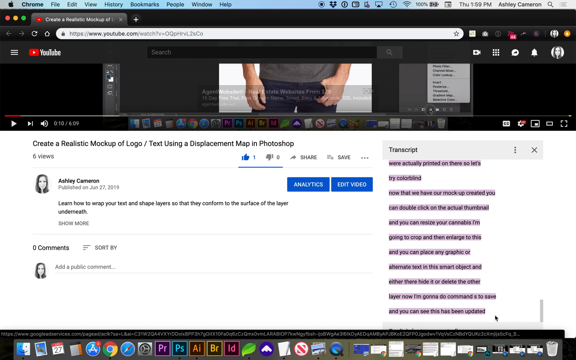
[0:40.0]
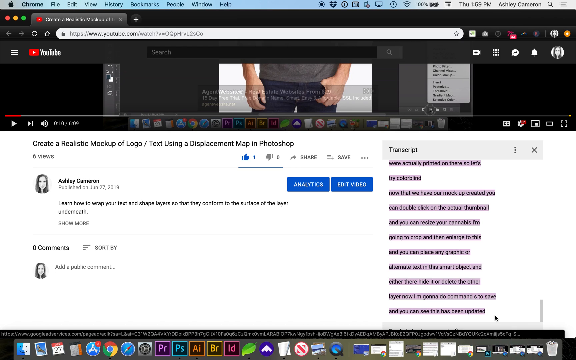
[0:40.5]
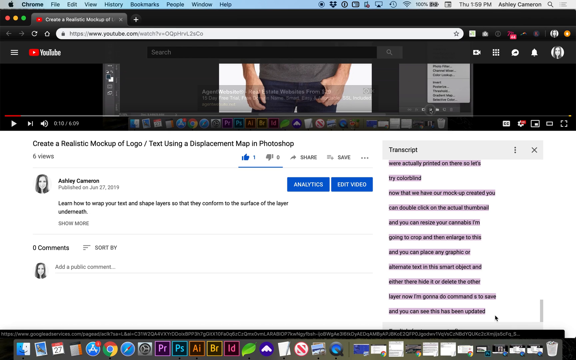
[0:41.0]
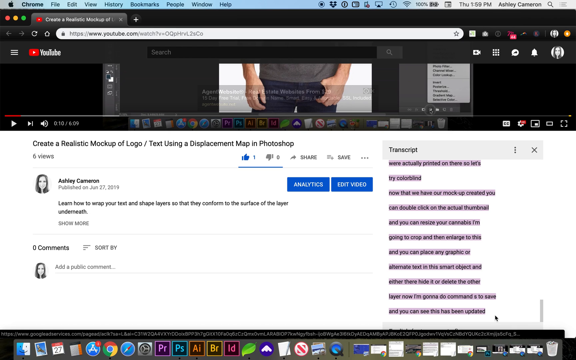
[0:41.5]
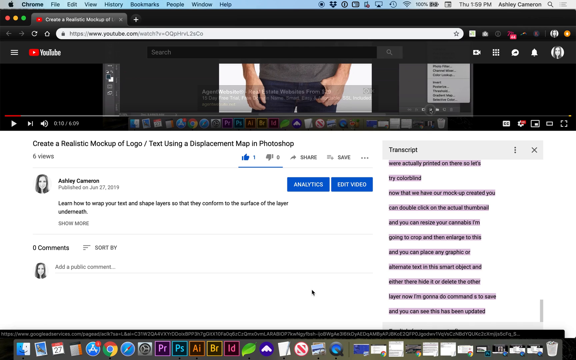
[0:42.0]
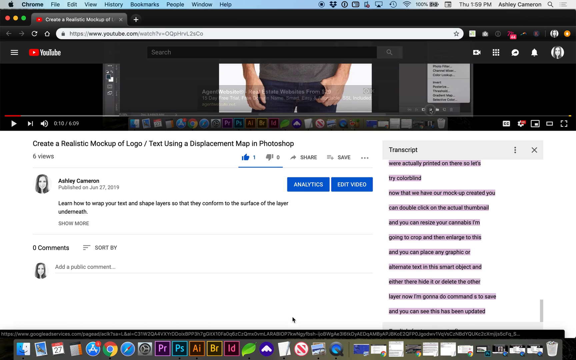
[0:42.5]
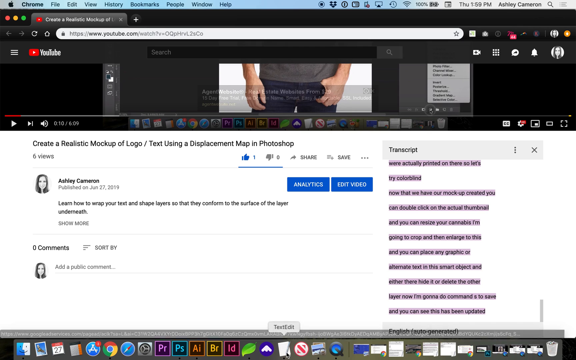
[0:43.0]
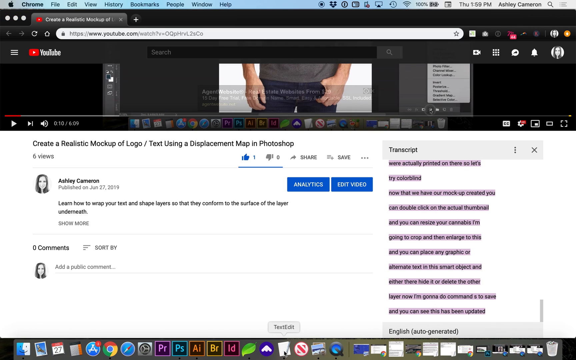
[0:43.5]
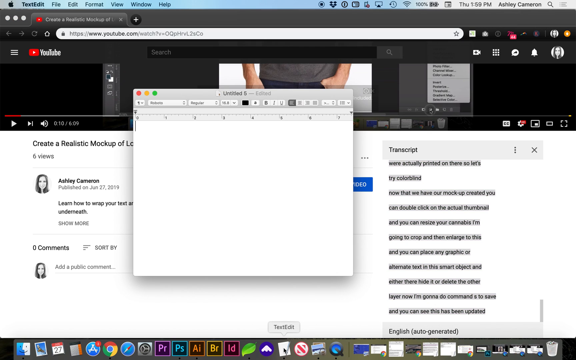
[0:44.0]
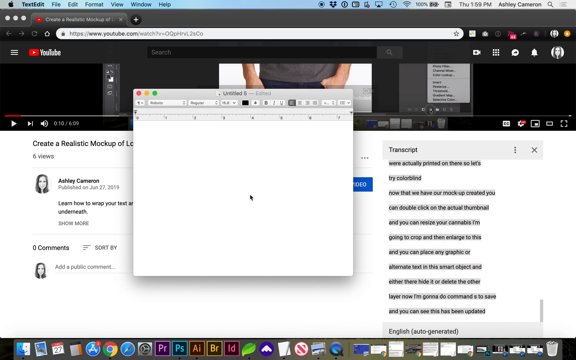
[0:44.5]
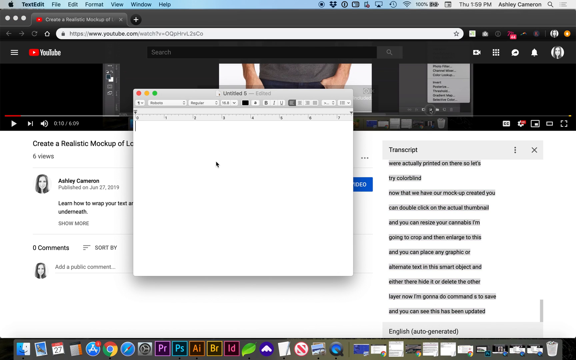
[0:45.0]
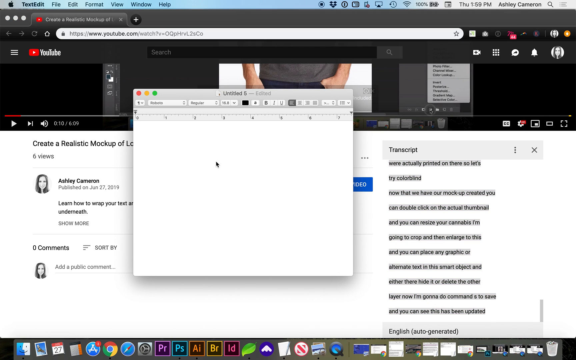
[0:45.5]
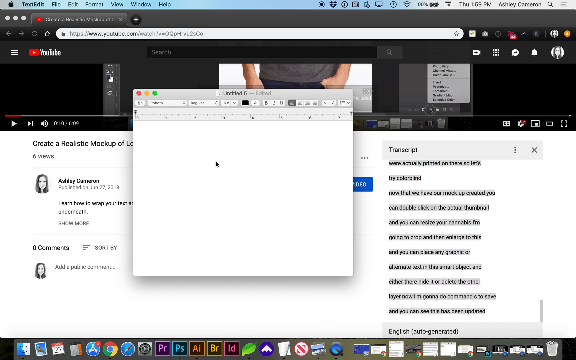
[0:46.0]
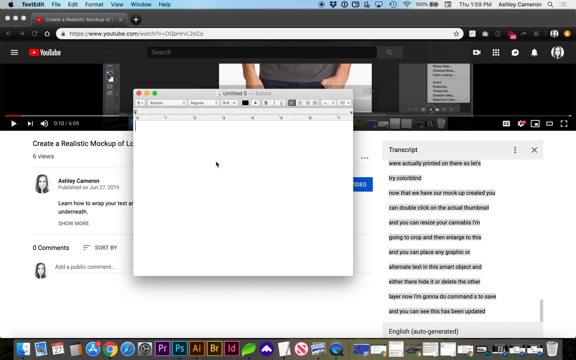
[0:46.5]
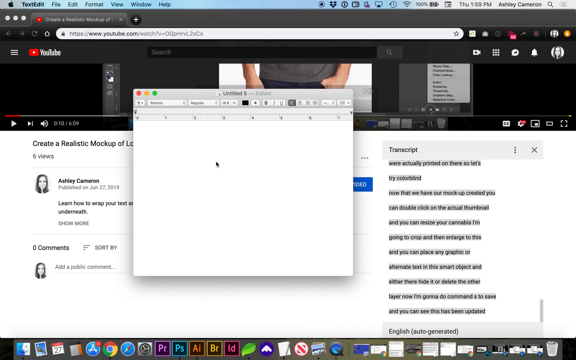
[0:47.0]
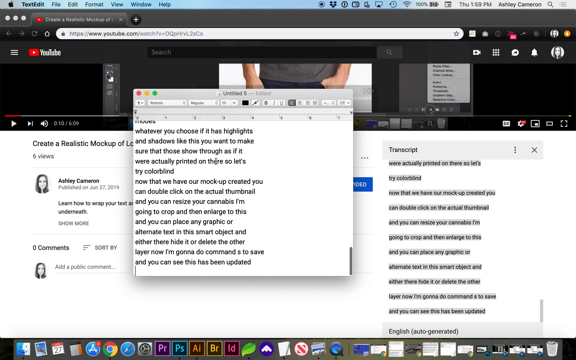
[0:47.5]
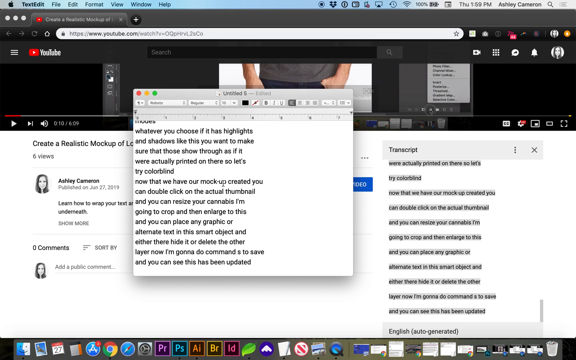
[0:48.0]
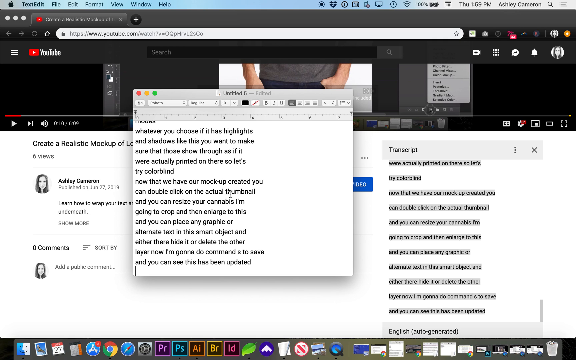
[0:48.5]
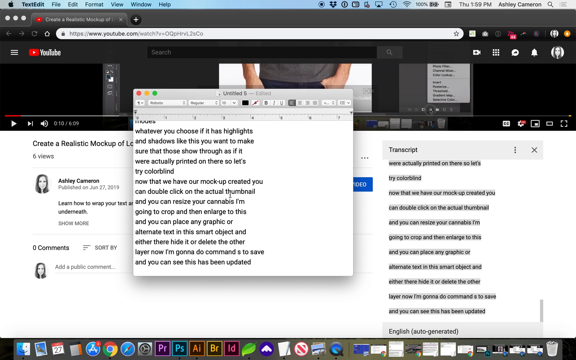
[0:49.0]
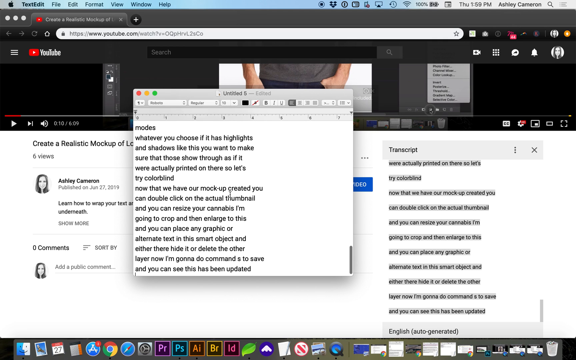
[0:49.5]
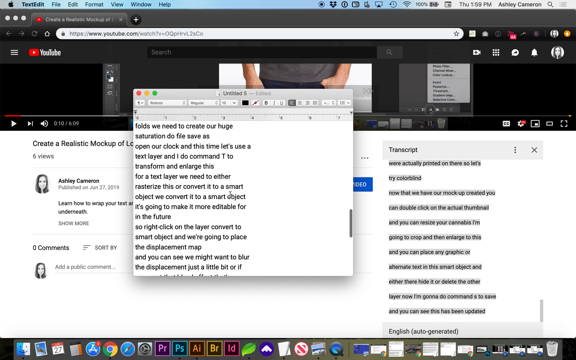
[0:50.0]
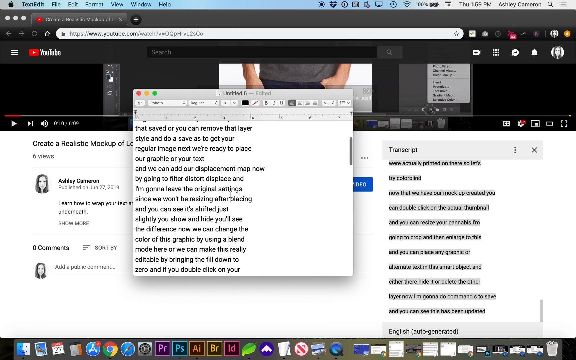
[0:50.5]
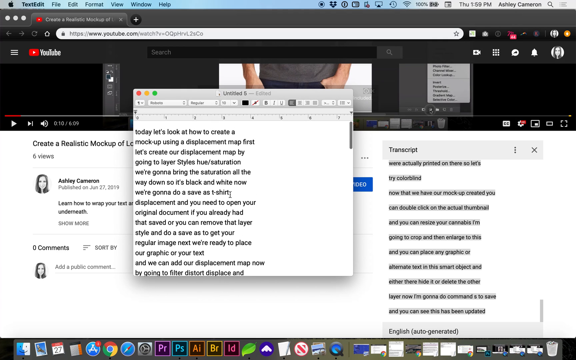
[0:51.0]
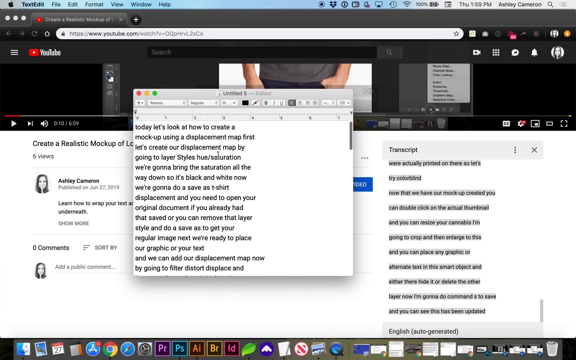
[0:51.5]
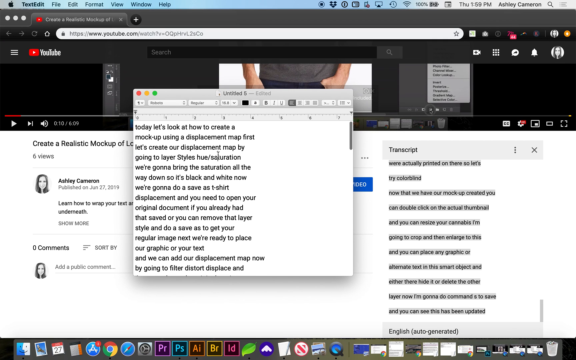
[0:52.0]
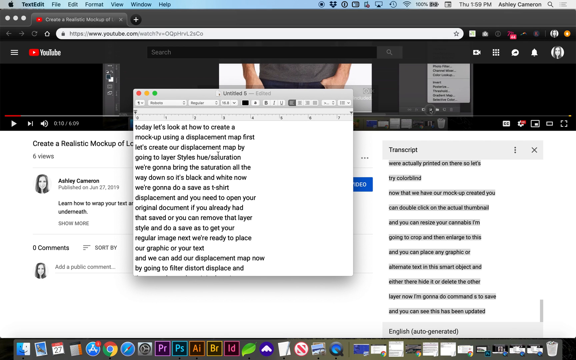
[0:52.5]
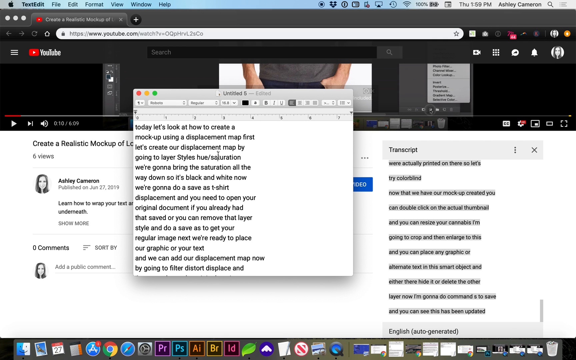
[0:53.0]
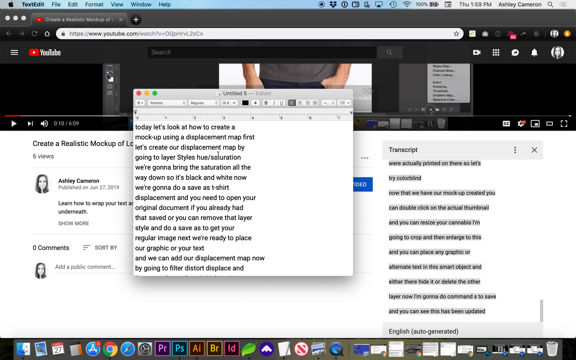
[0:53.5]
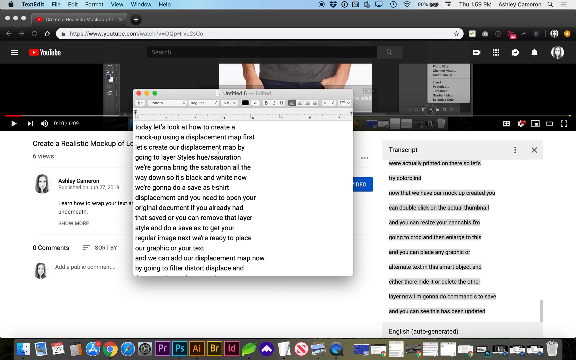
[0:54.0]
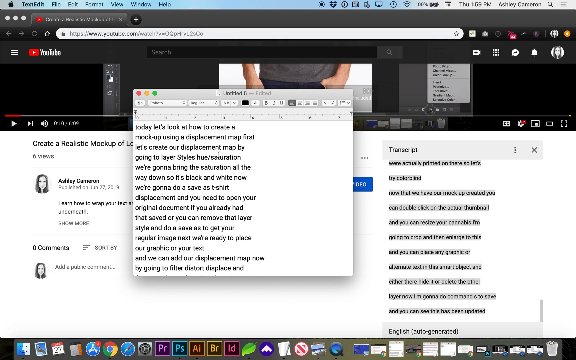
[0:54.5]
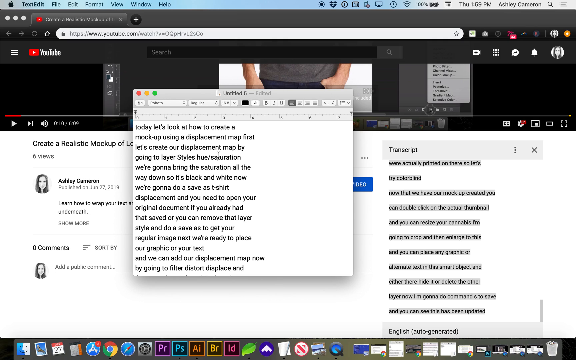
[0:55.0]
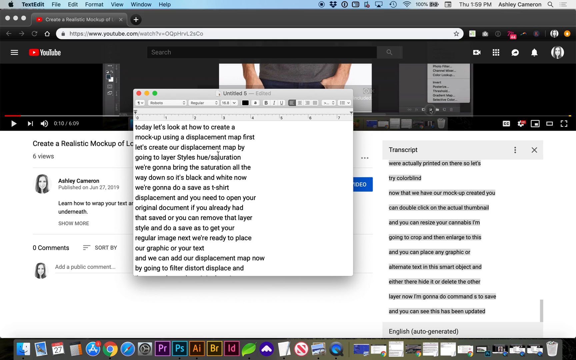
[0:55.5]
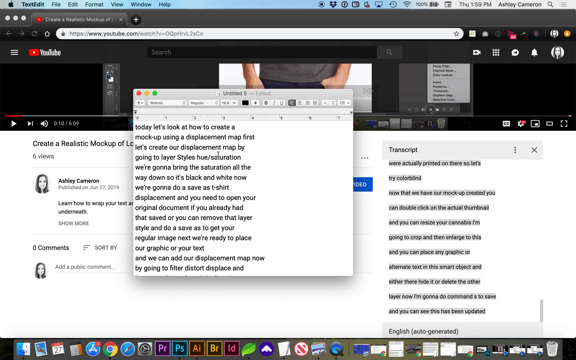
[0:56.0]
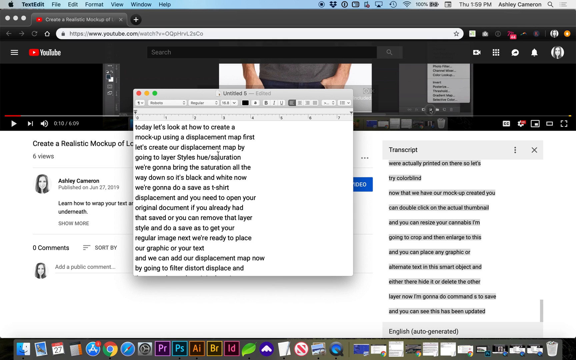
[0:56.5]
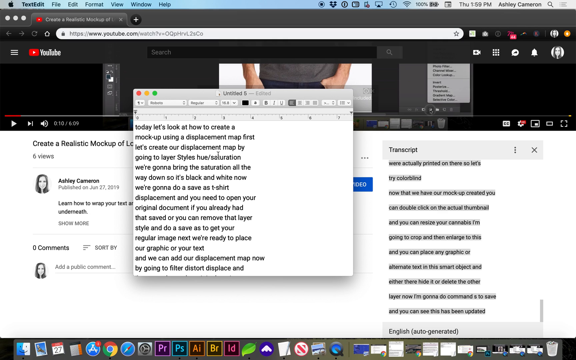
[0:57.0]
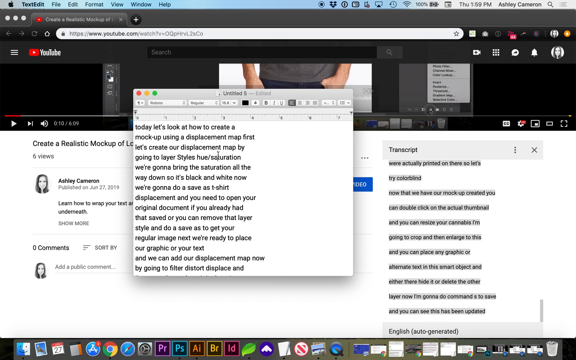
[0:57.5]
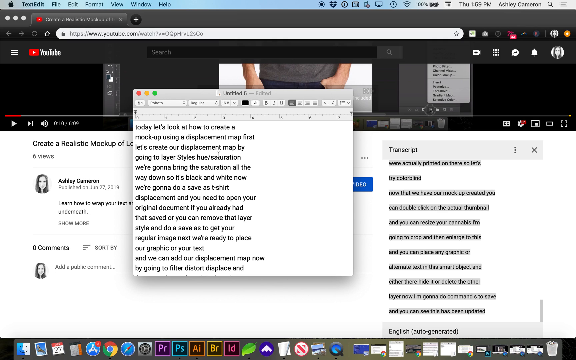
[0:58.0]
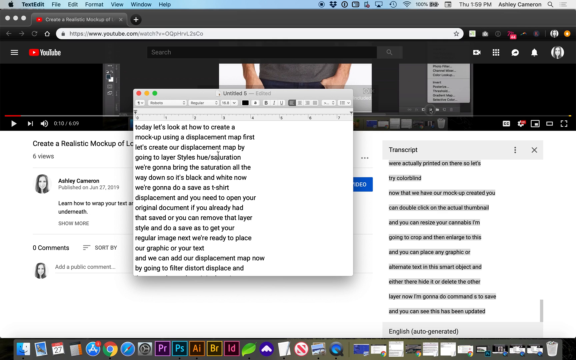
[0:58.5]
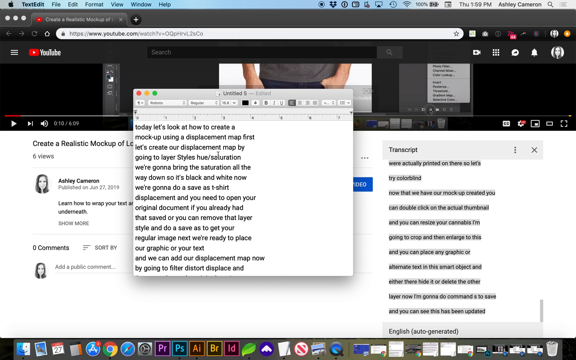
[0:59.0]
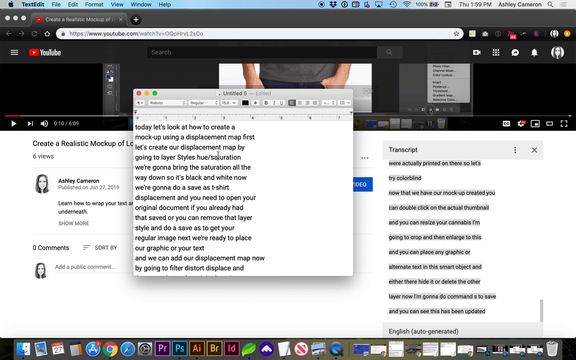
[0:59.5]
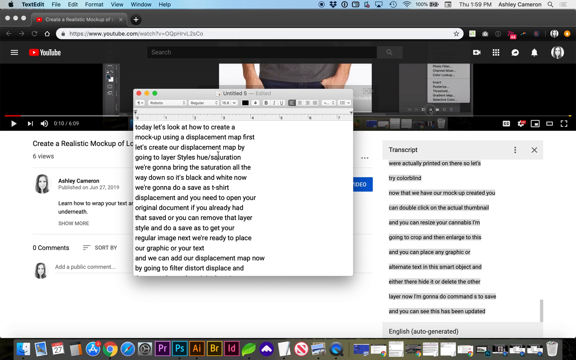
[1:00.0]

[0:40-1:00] In the background there is an Apple note app, and everything that was selected in the transcription has been pasted into it. Afterward, the mouse stays still.